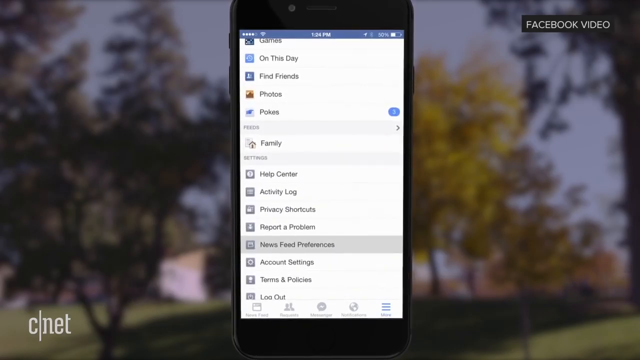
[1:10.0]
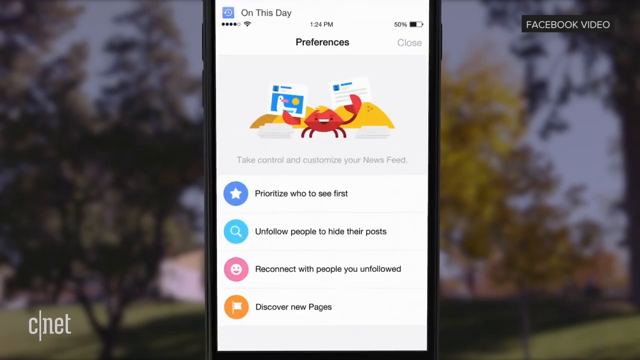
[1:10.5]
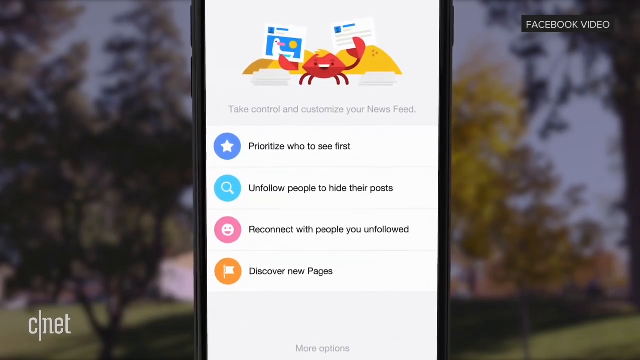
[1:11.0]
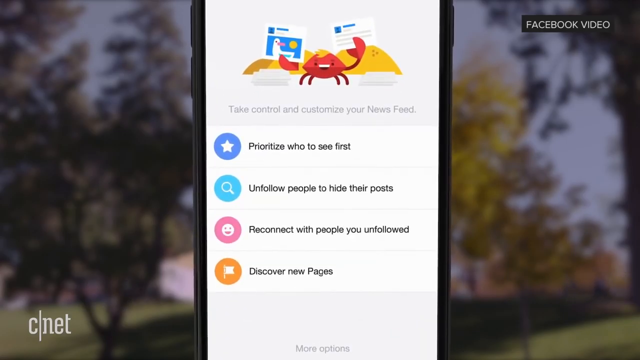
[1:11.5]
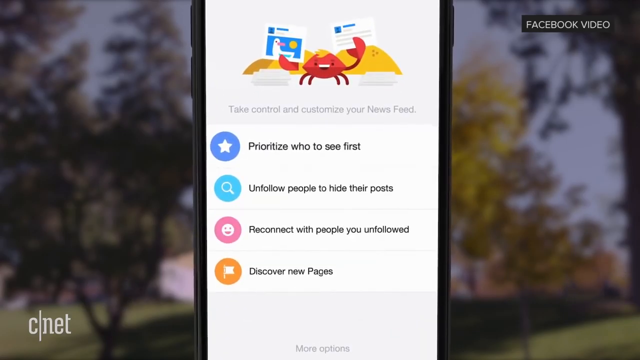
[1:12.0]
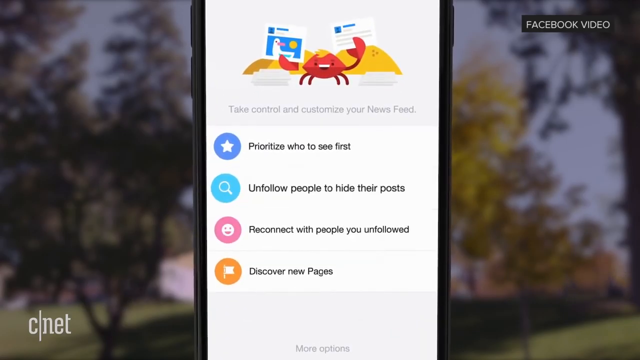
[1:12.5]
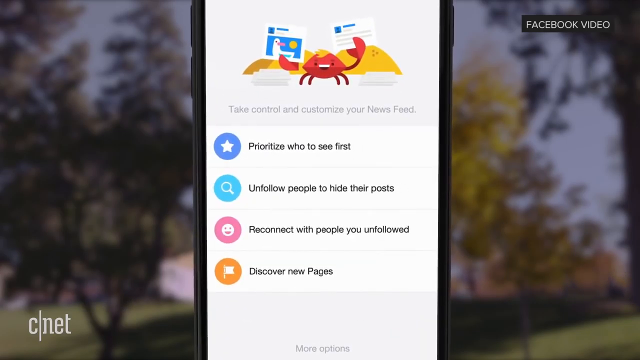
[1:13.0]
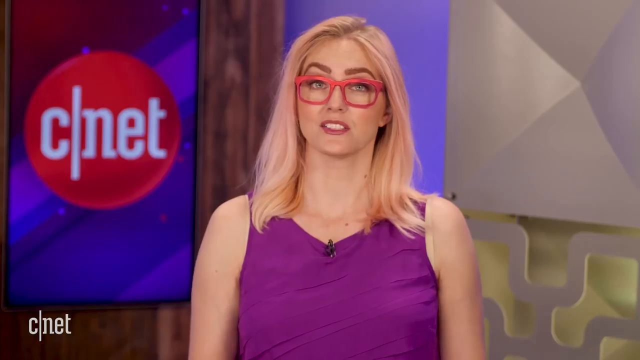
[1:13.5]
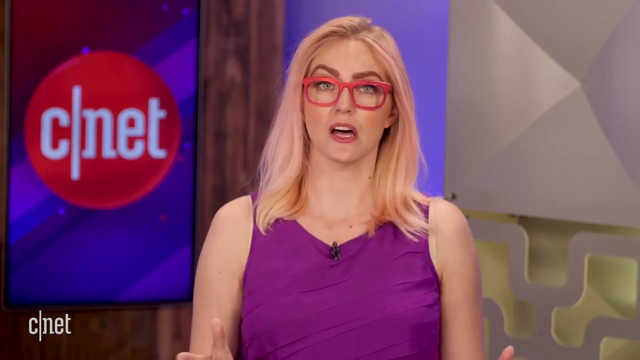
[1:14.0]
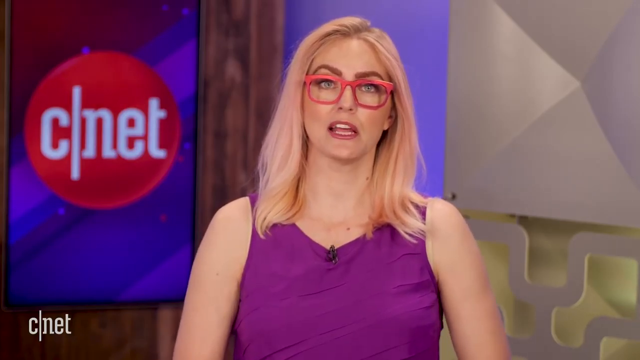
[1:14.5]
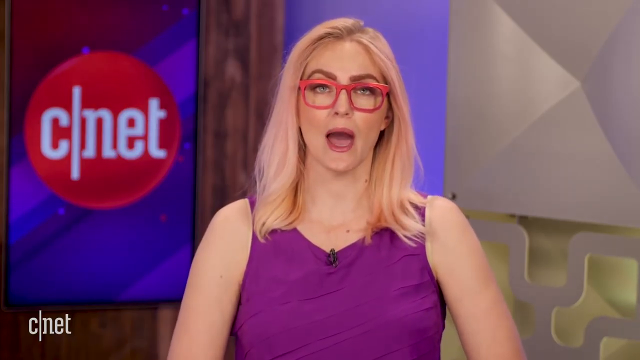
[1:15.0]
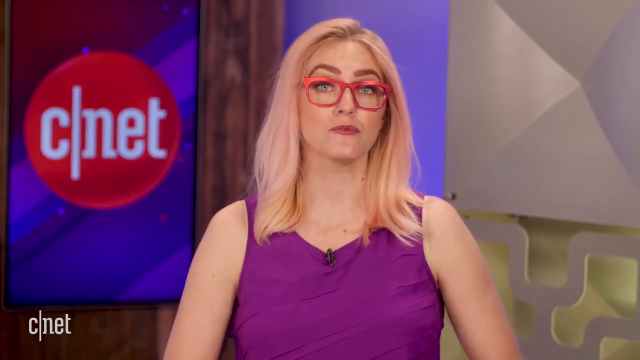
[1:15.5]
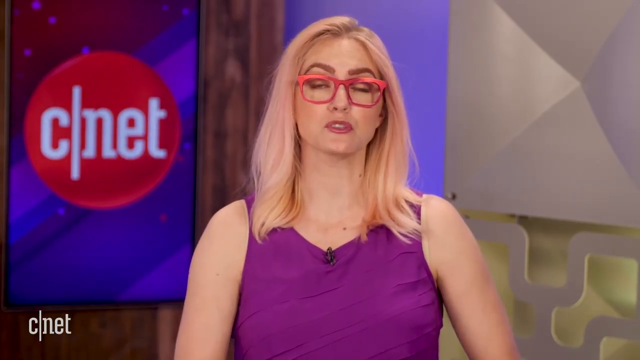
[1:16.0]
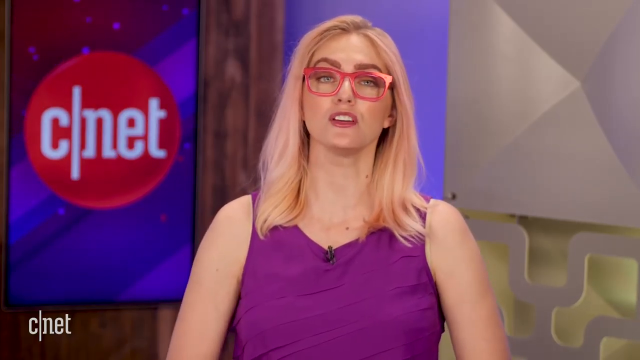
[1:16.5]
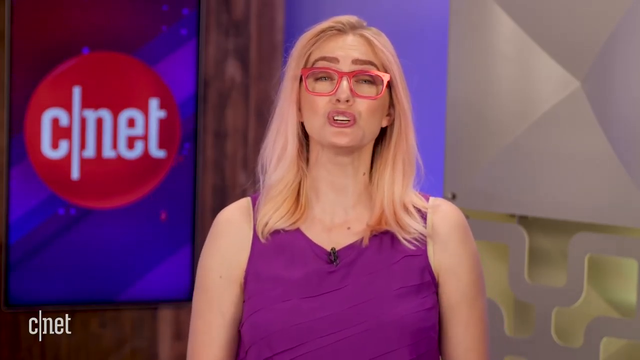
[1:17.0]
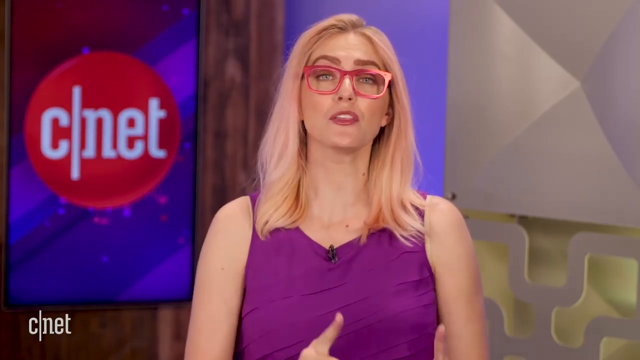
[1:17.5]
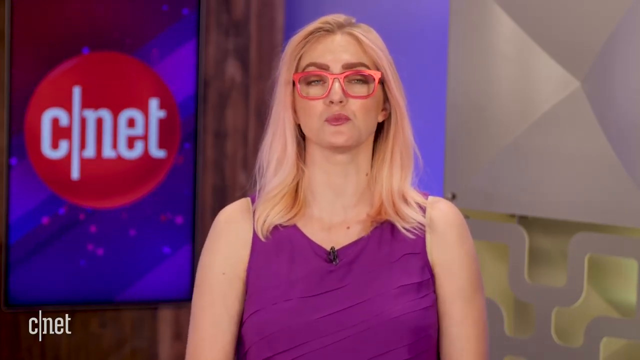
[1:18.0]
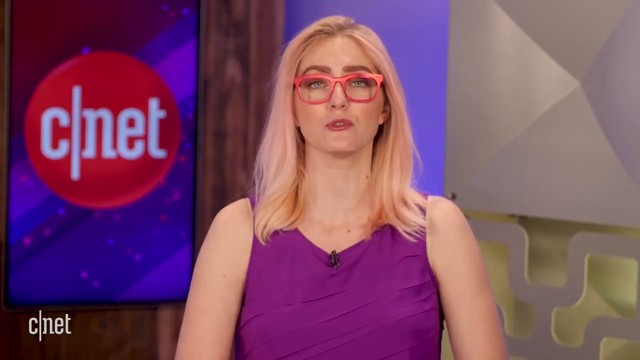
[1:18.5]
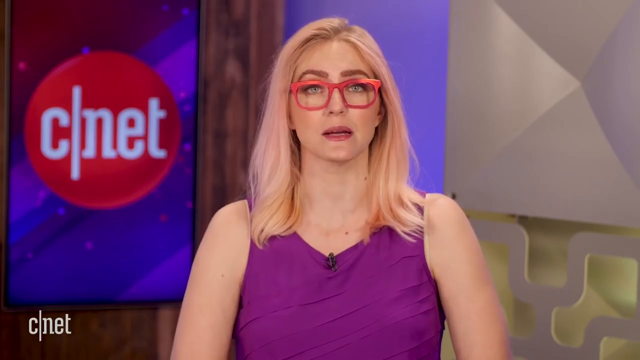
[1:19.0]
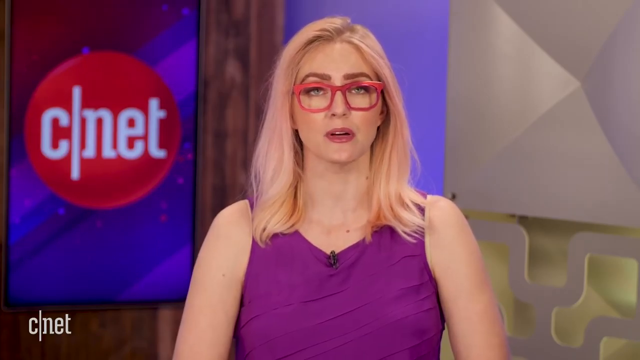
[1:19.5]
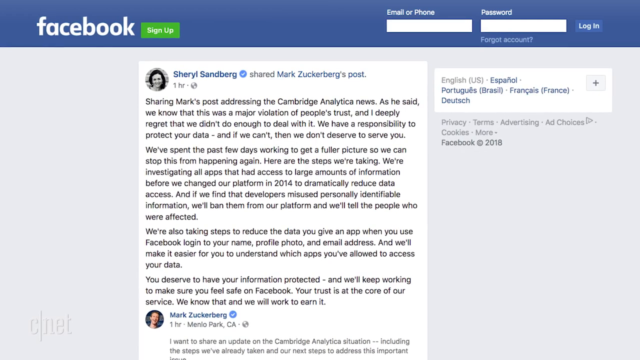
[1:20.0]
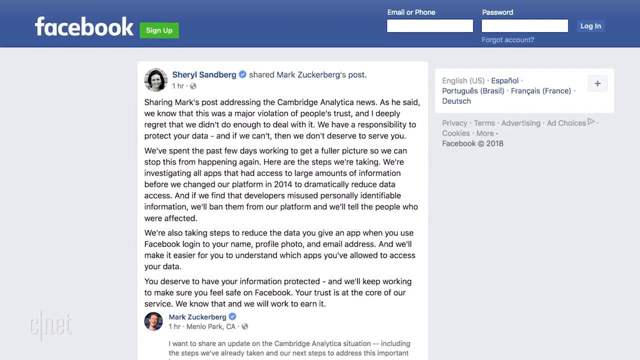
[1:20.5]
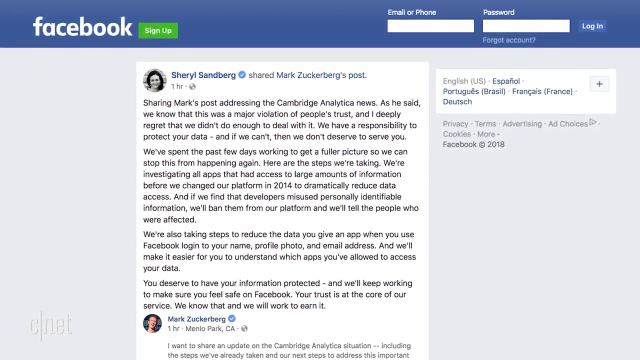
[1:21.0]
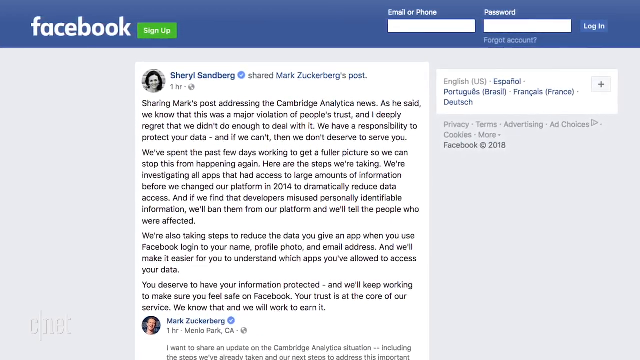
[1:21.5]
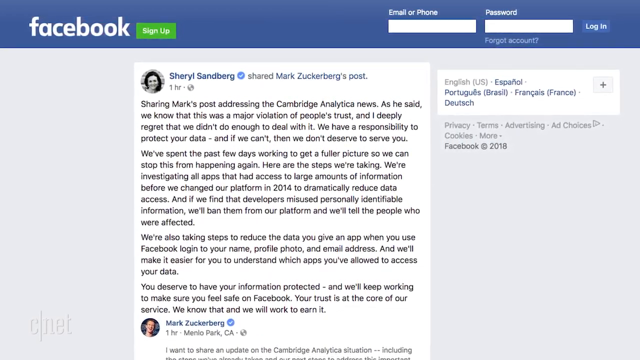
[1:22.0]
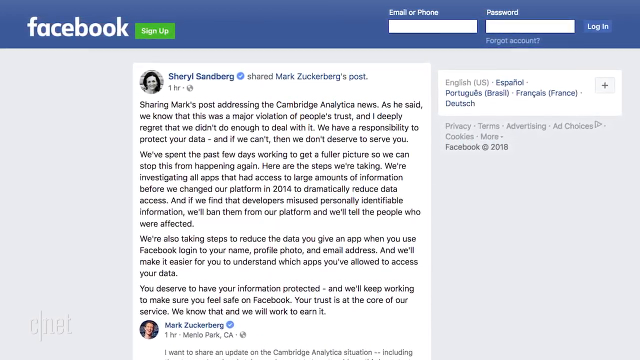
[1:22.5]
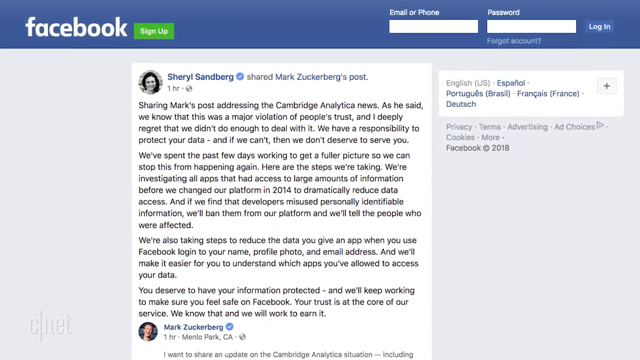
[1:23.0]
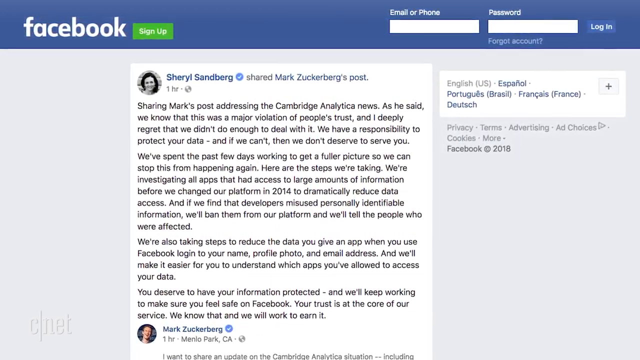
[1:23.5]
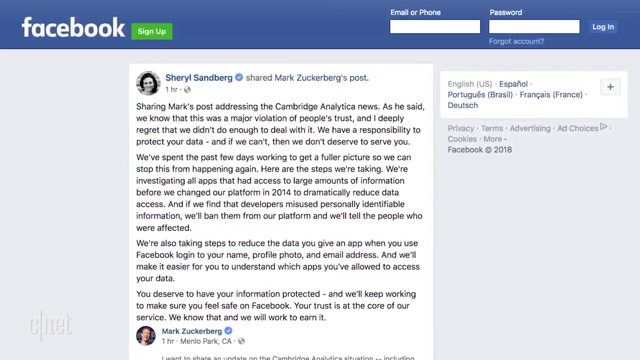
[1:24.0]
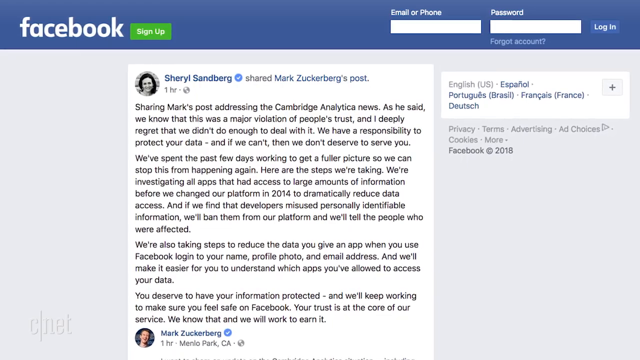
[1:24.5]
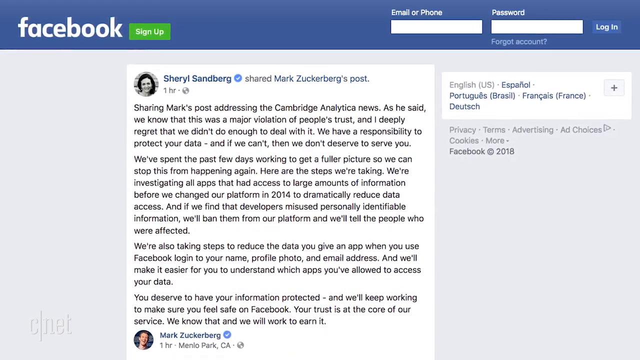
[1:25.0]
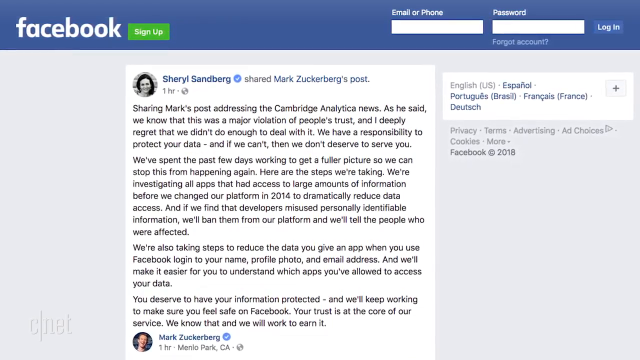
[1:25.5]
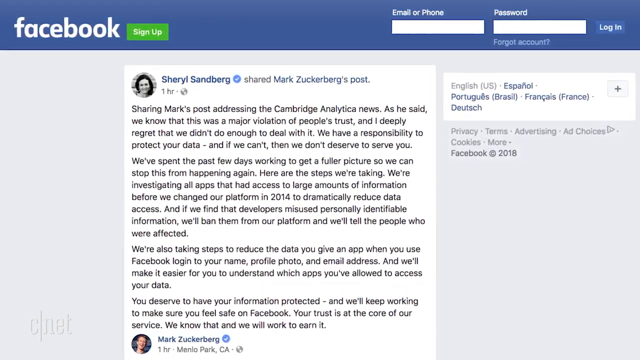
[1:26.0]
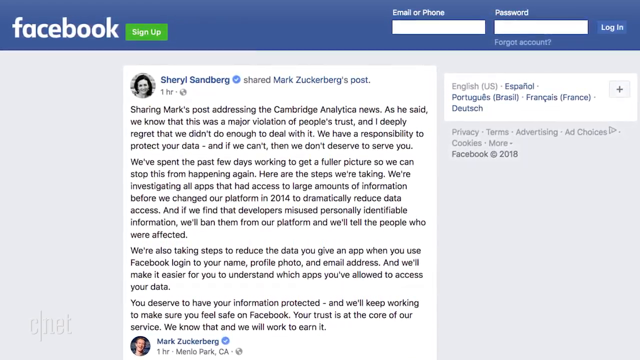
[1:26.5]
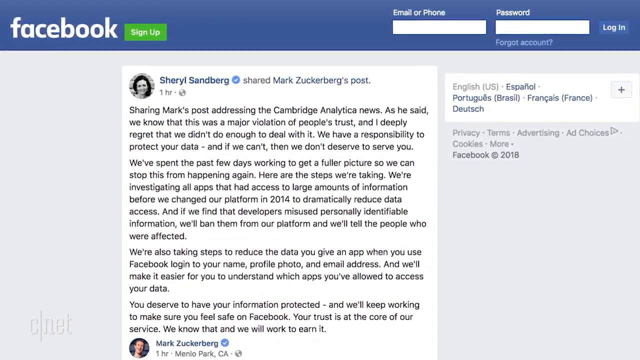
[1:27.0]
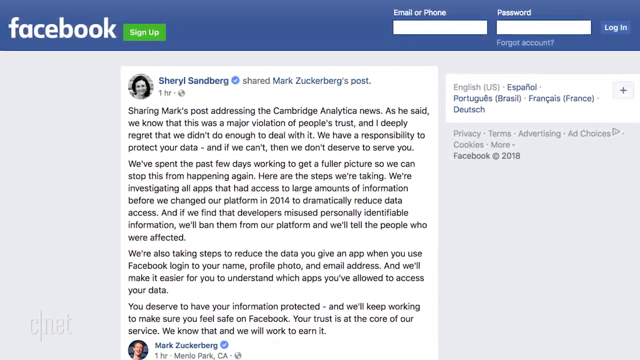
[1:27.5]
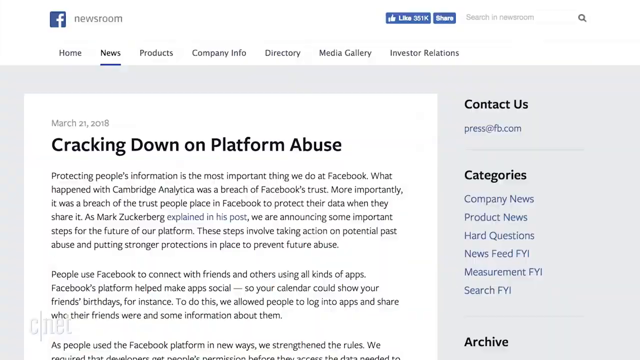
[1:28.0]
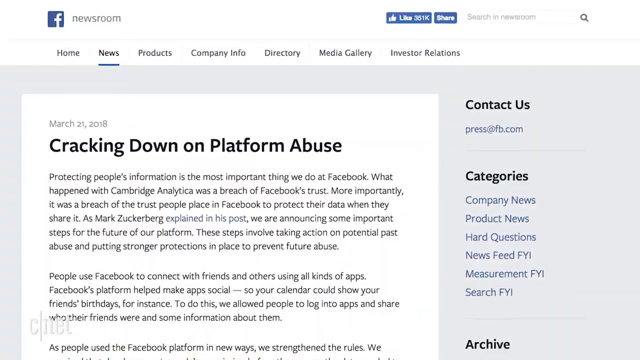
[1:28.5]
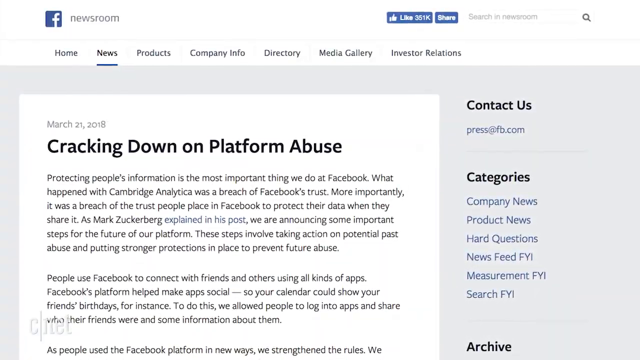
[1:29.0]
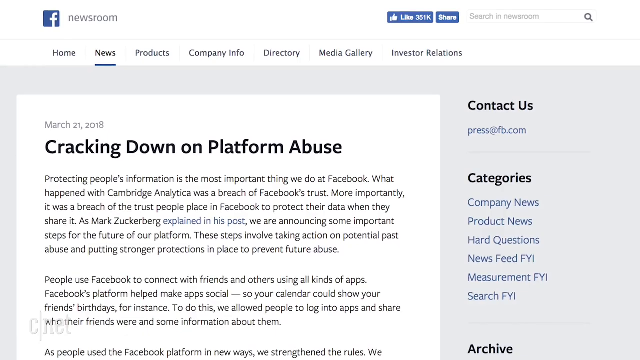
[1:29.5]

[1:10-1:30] A phone appears with some suggestions on its screen, including options such as "unfollow" and "reconnect with people you unfollowed." The video switches to the woman in the purple dress, then to a Facebook page reading "Sheryl Sandberg shared Mark Zuckerberg's post," with text about "sharing Mark's post addressing the Cambridge Analytica news" and "we know that this was a major violation." Screens change very quickly. Next comes "cracking down on platform abuse," and then the phone again, held upright and showing news feed preferences, with a background that seems to be trees and a sky. Text also reads "we're also taking steps to reduce the data you give an app."